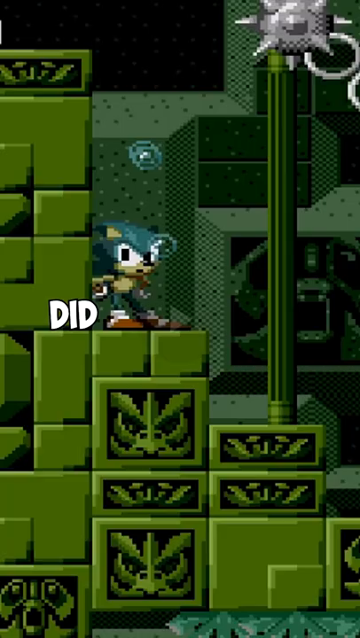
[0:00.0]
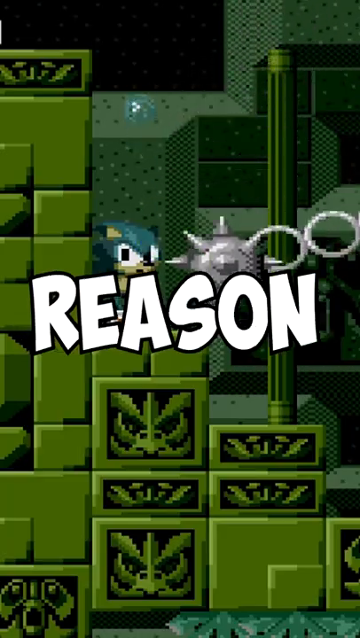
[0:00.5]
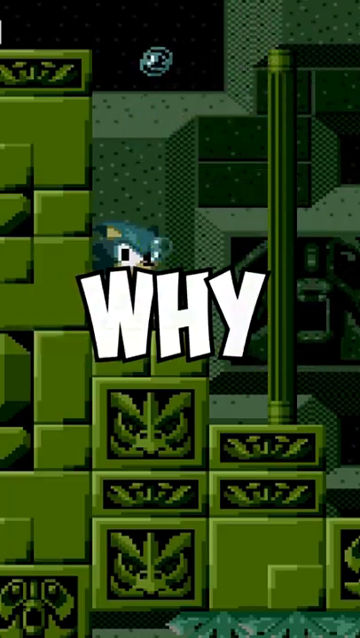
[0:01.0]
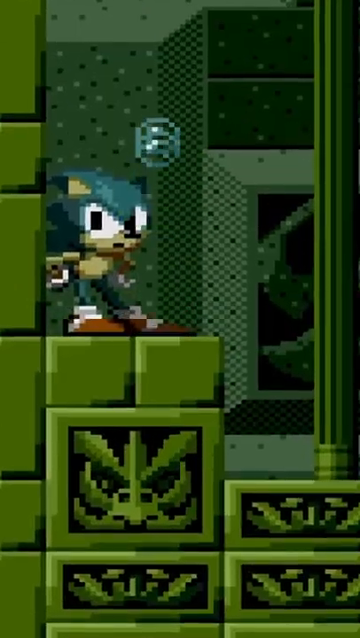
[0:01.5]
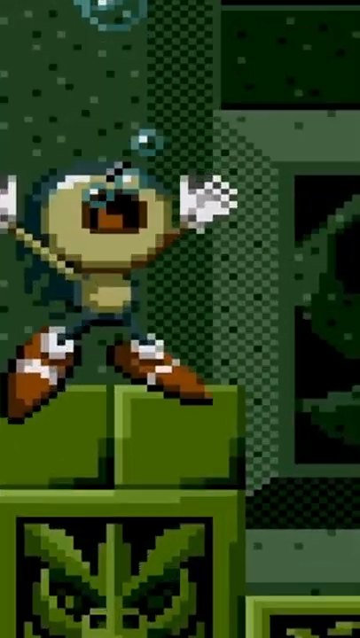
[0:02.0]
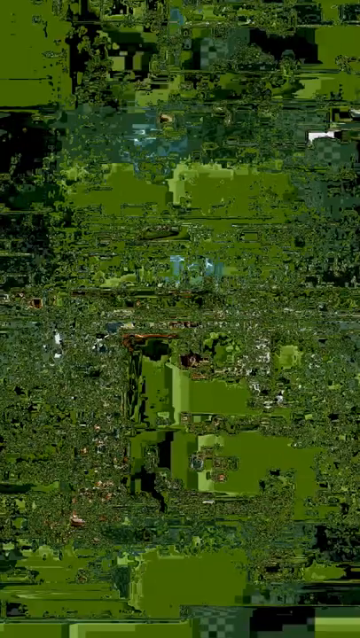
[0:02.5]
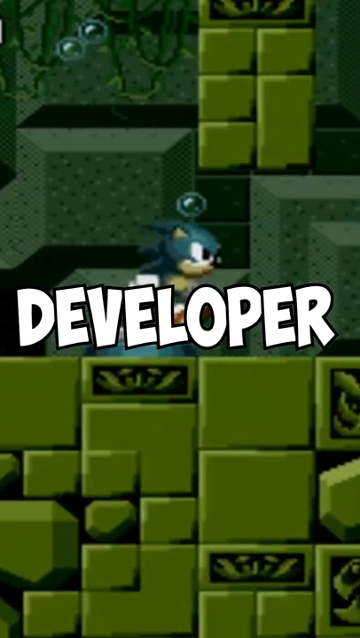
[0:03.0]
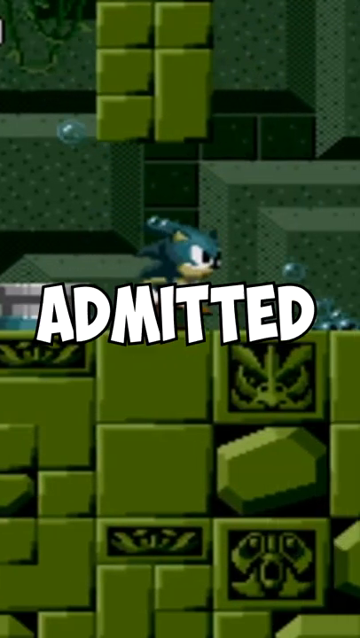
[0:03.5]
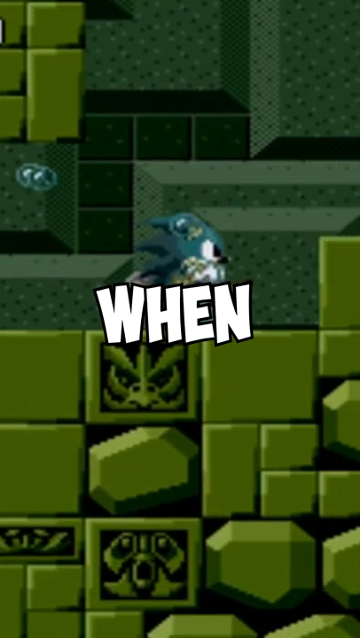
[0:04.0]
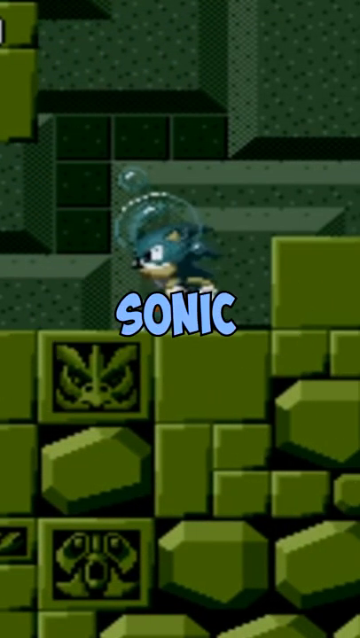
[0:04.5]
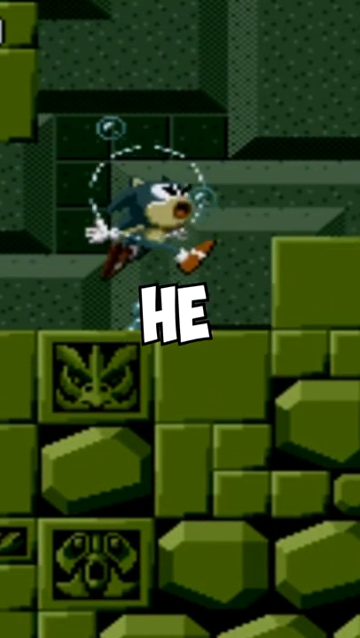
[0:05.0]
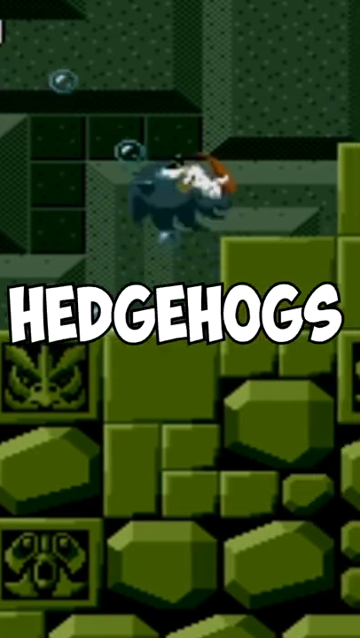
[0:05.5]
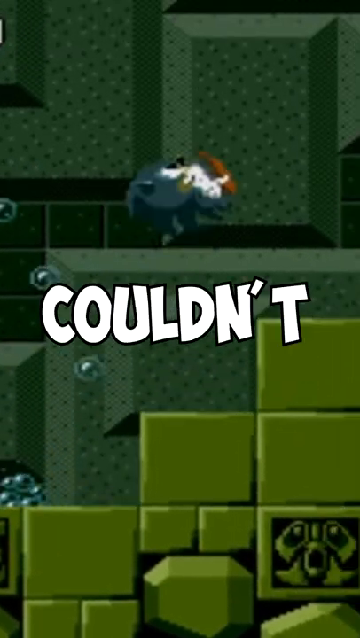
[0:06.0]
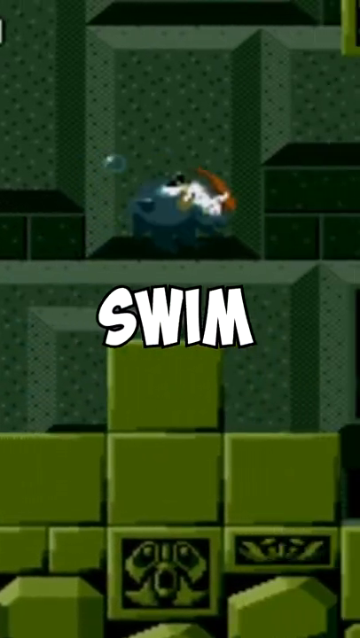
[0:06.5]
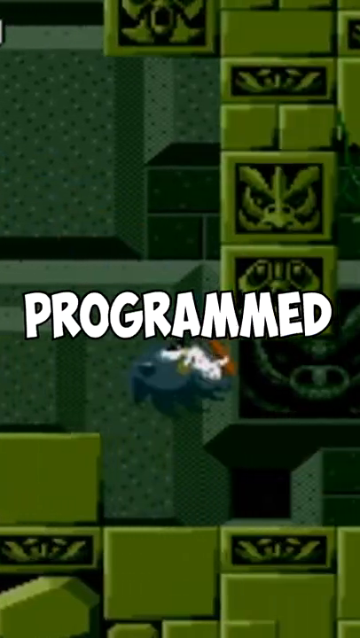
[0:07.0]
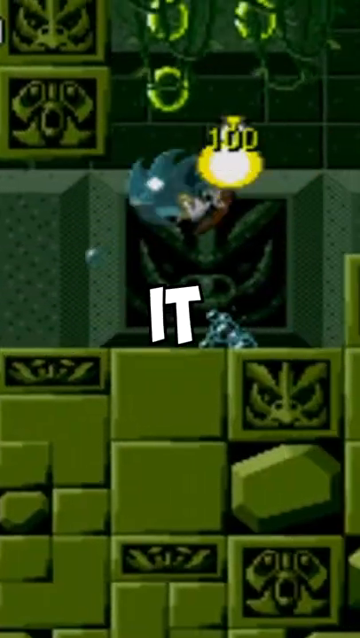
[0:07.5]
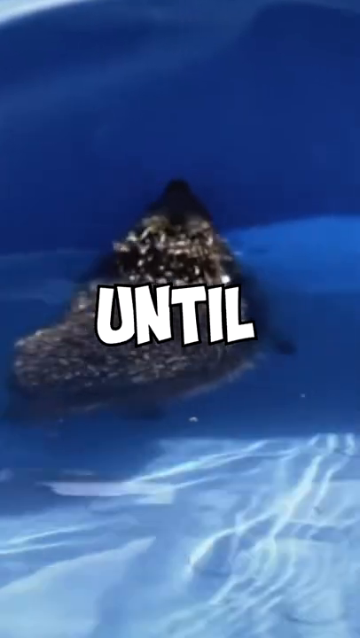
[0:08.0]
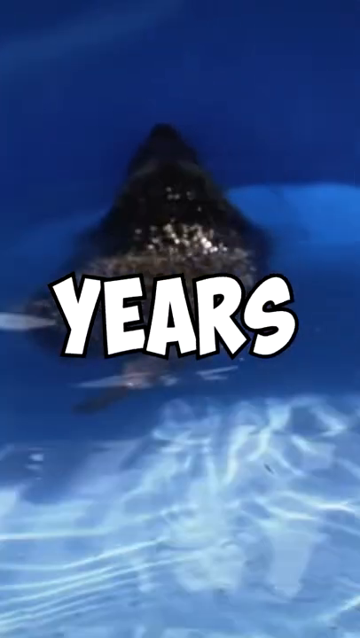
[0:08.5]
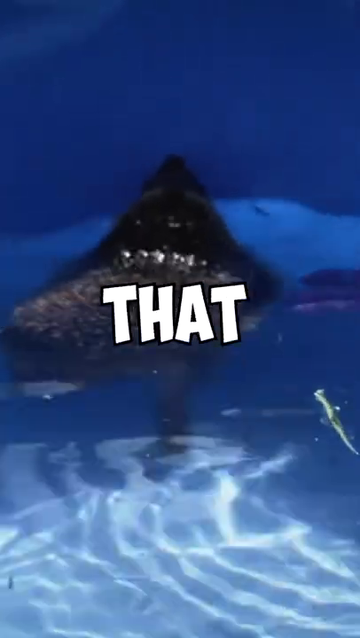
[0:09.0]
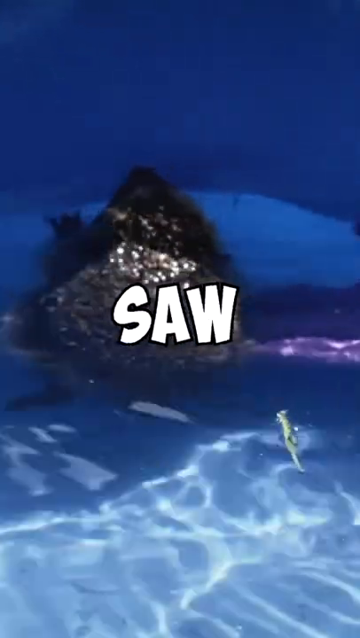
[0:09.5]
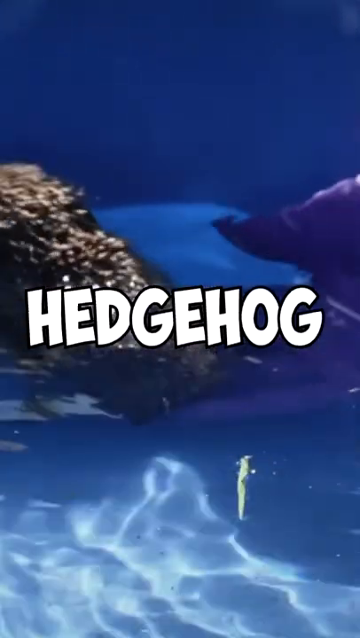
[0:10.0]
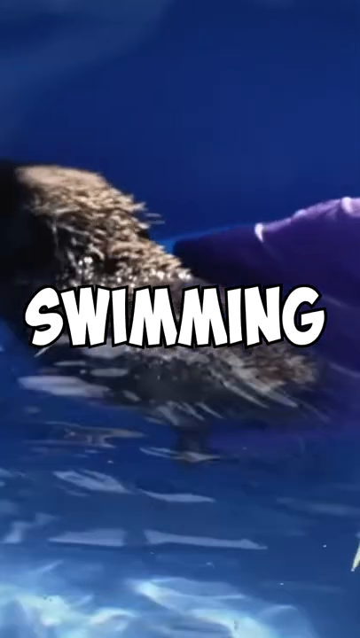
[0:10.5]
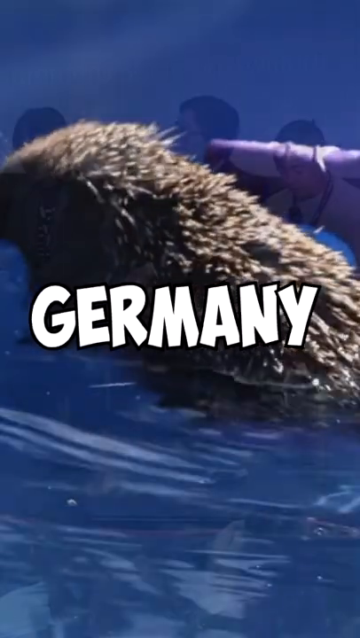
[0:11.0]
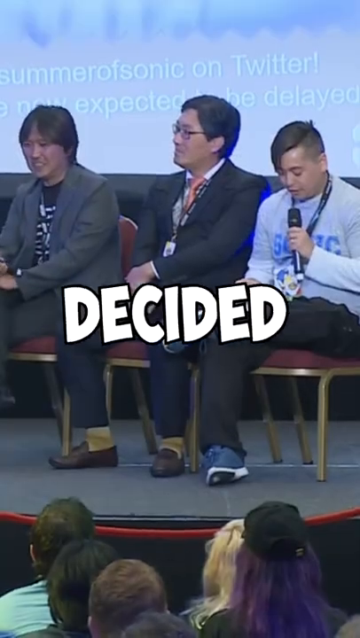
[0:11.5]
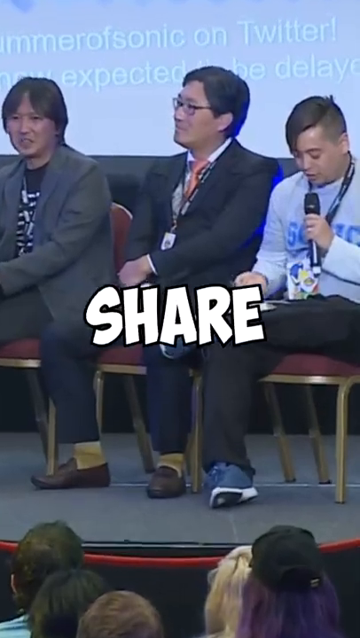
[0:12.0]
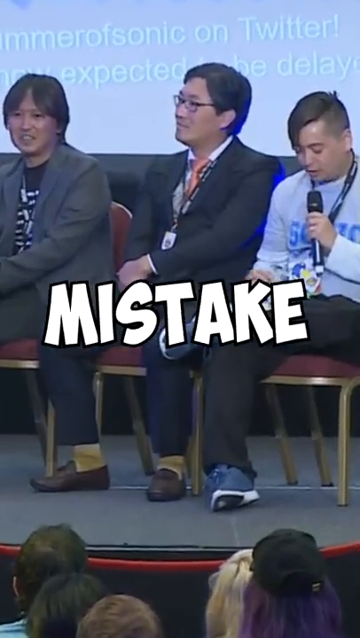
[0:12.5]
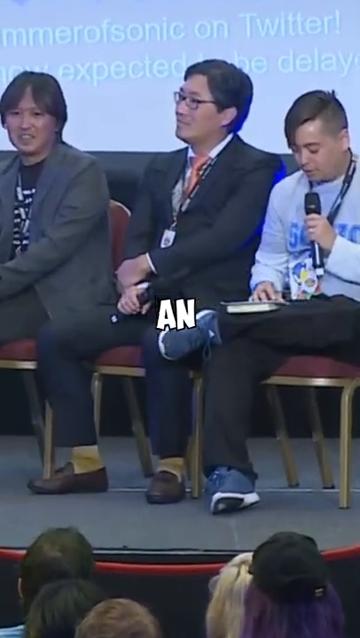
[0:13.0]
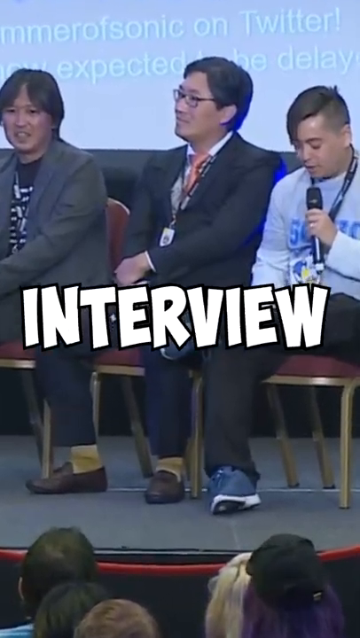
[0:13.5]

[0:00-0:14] This short video is upright, possibly made for display on a mobile device, and its topic is the old 2D Sonic the Hedgehog games. Text is overlaid on footage of the old Genesis Sonic games; it begins "the developer actually admitted when making Sonic" and goes on to say that he assumed hedgehogs couldn't swim, and that it wasn't until years later that he saw a hedgehog swimming in Germany, so he apparently admitted his mistake. The gameplay behind the overlaid text shows Sonic moving very slowly underwater. Next comes an image of a real-life hedgehog in some kind of pool, apparently swimming, and a final cut shows the developer of Sonic doing an interview.